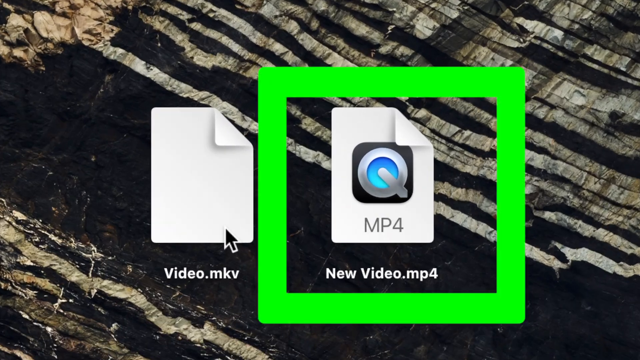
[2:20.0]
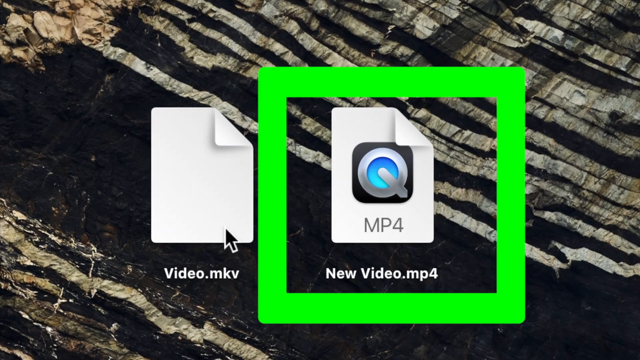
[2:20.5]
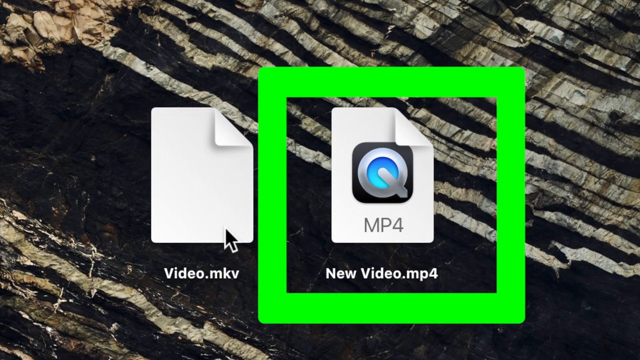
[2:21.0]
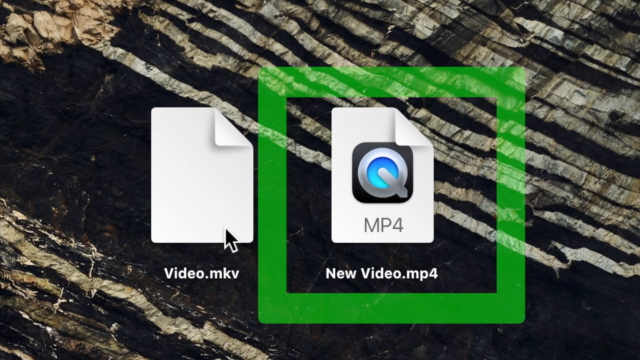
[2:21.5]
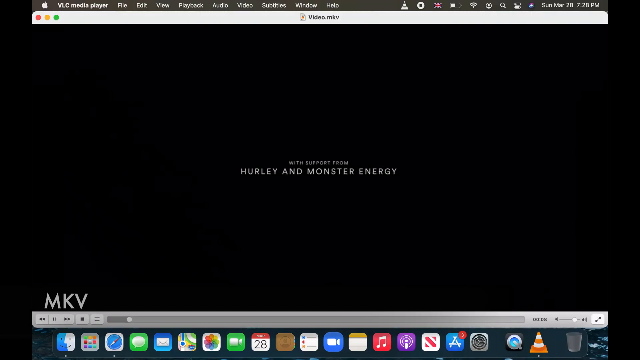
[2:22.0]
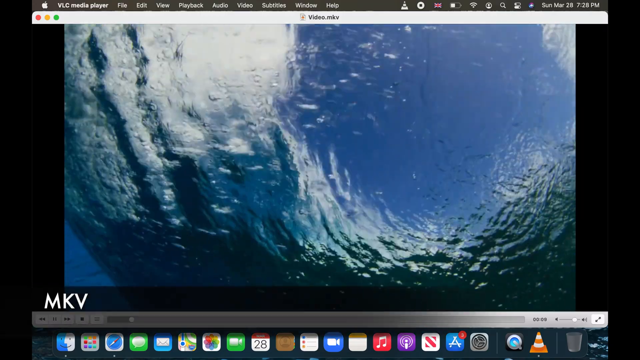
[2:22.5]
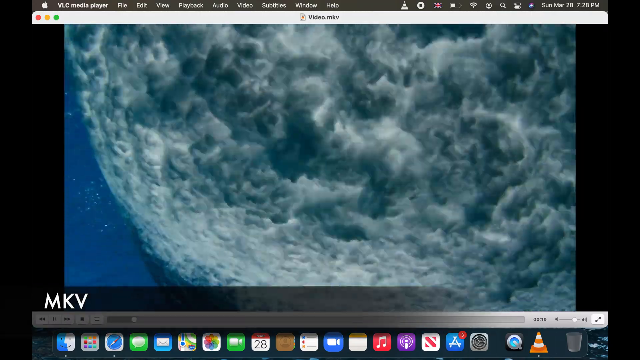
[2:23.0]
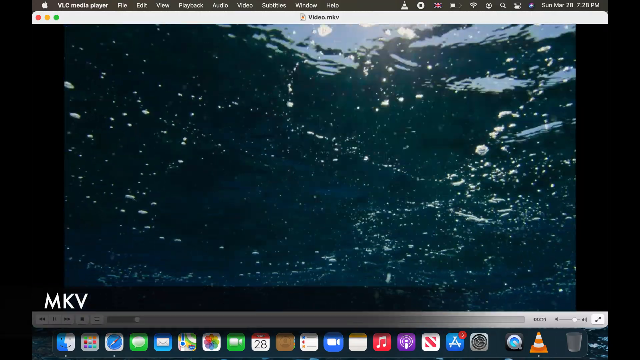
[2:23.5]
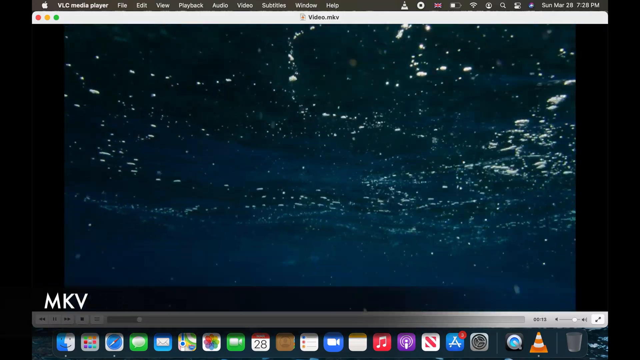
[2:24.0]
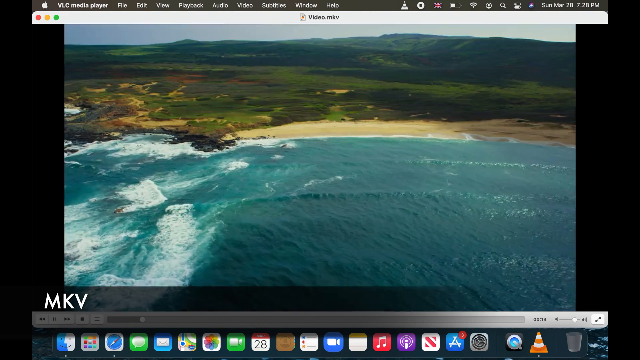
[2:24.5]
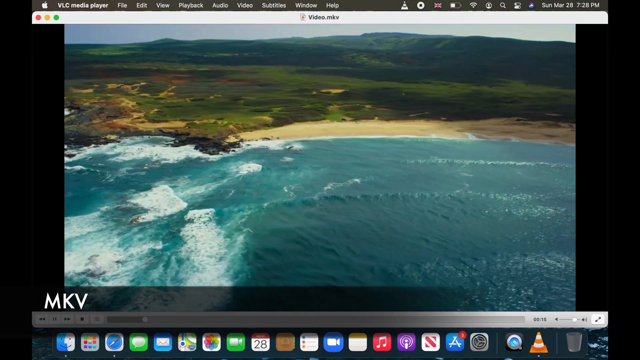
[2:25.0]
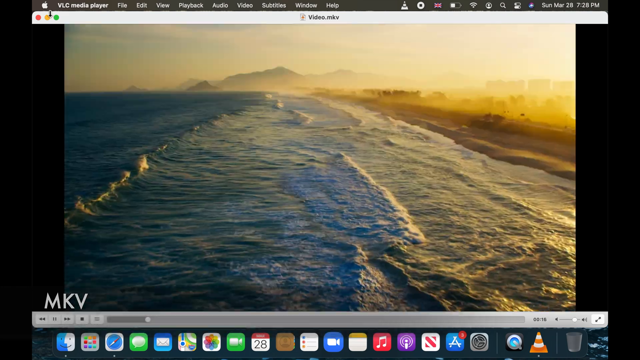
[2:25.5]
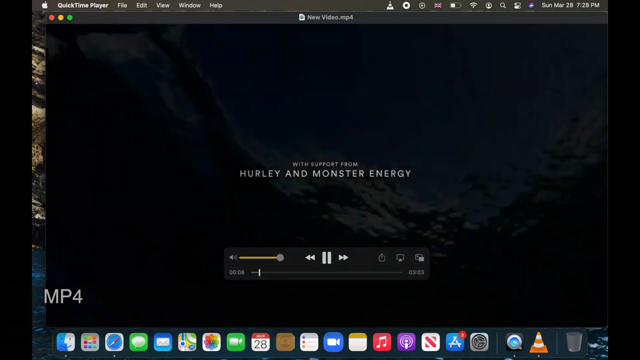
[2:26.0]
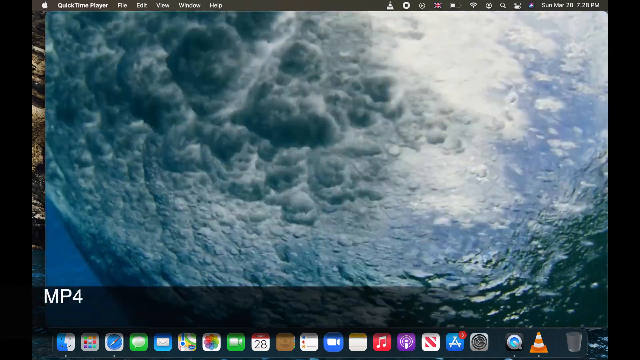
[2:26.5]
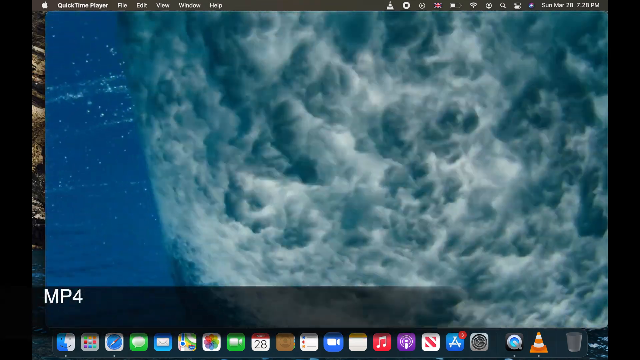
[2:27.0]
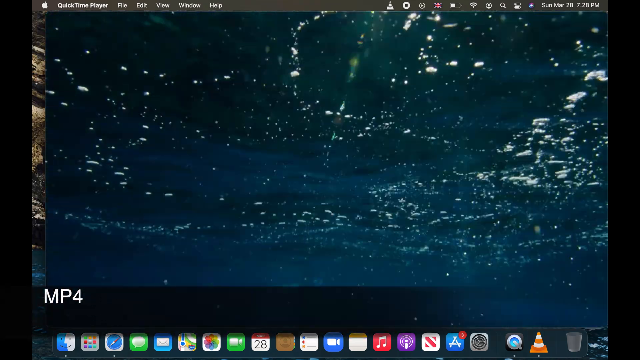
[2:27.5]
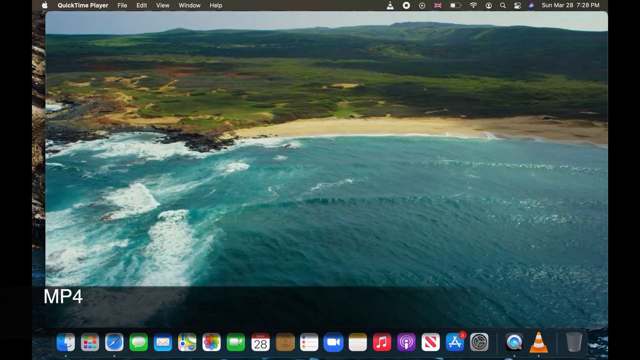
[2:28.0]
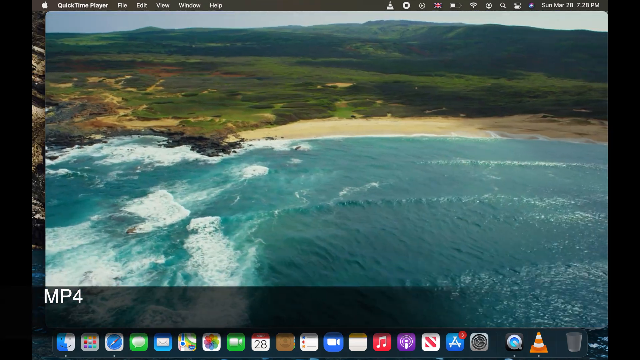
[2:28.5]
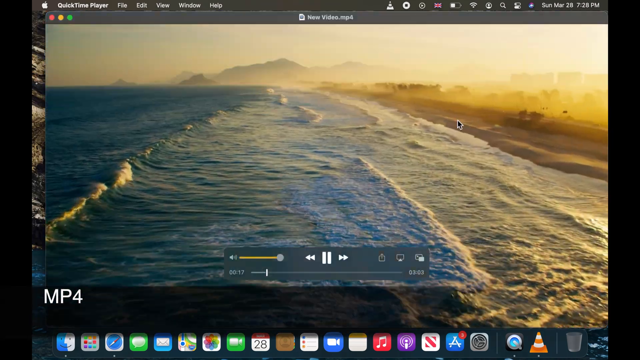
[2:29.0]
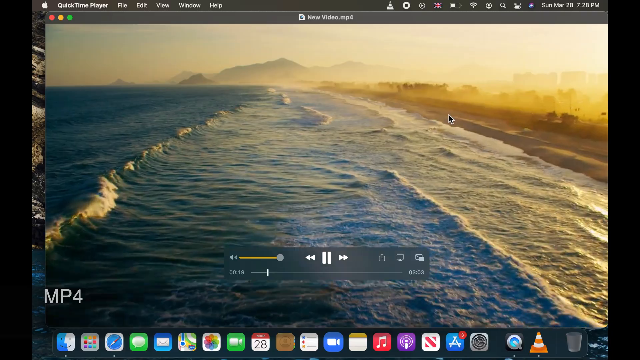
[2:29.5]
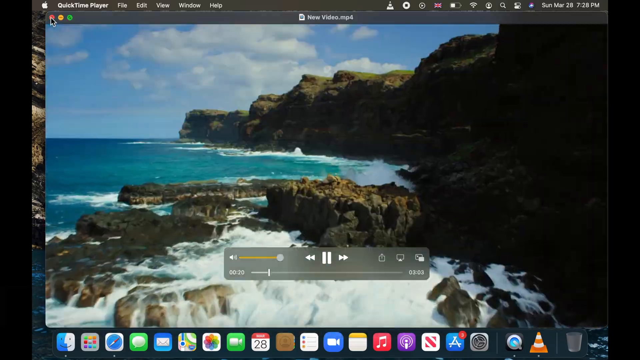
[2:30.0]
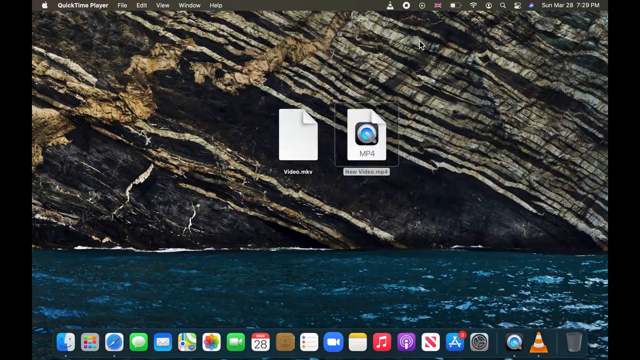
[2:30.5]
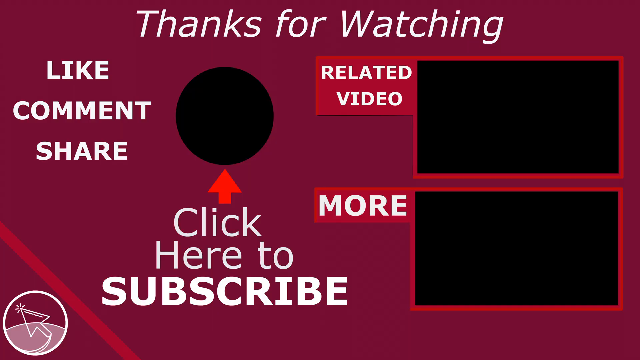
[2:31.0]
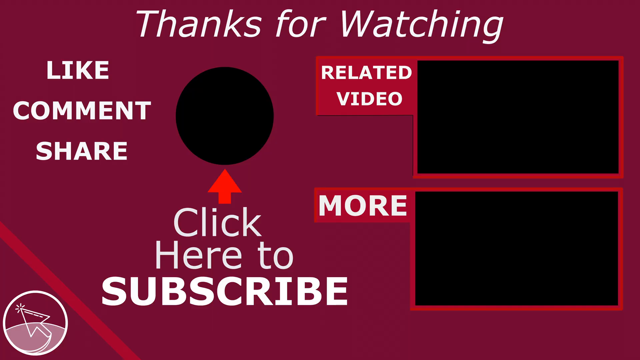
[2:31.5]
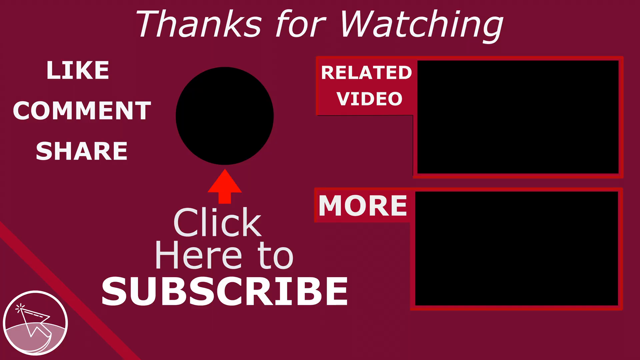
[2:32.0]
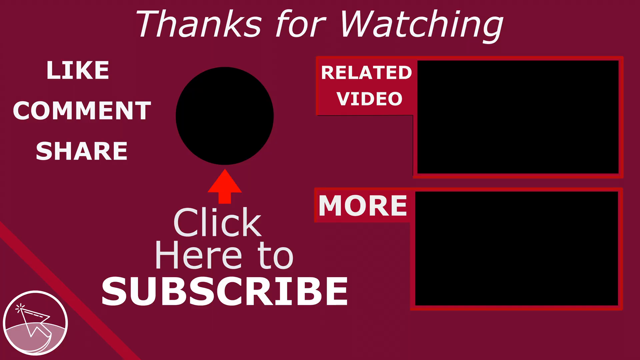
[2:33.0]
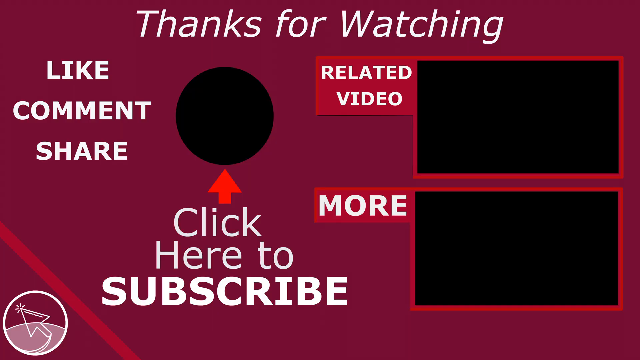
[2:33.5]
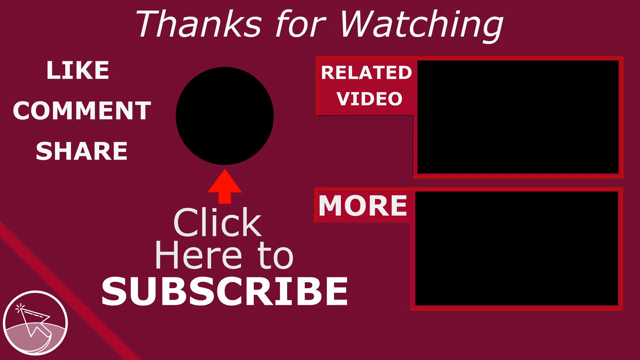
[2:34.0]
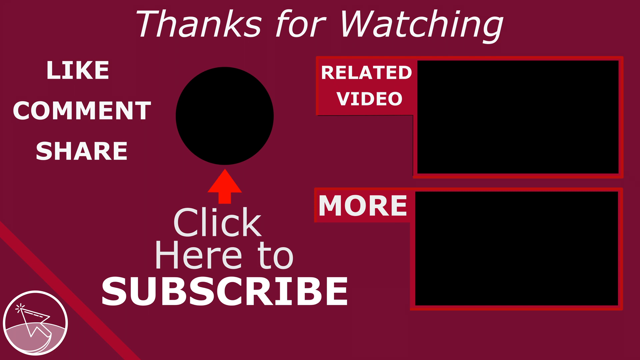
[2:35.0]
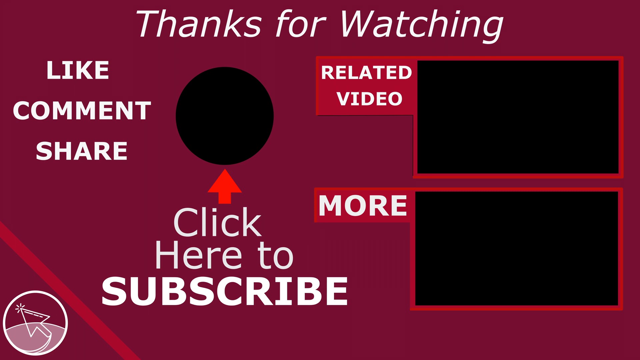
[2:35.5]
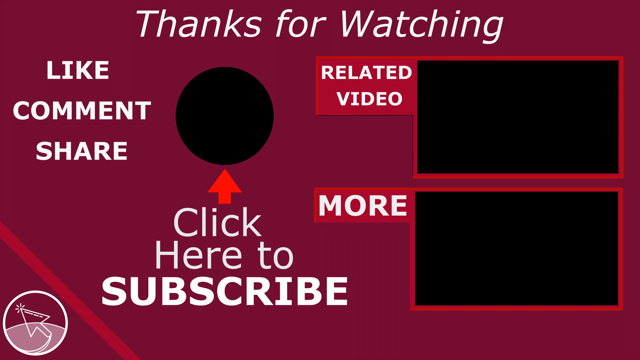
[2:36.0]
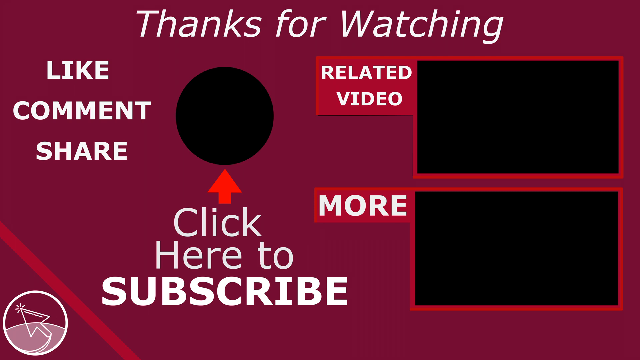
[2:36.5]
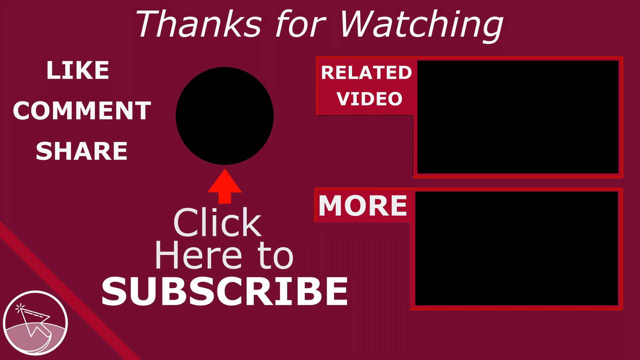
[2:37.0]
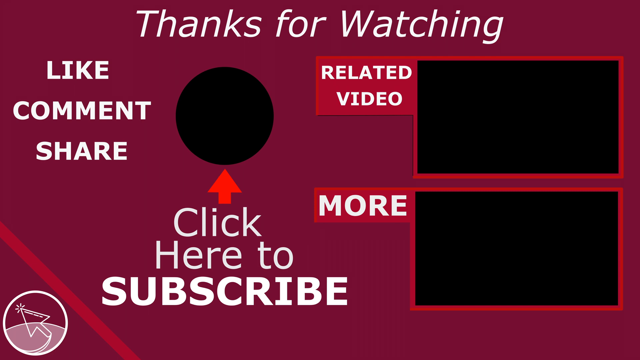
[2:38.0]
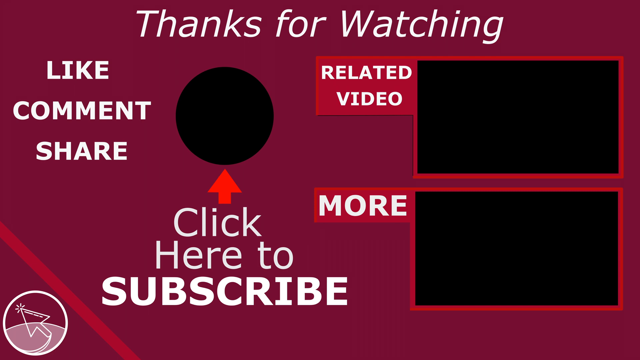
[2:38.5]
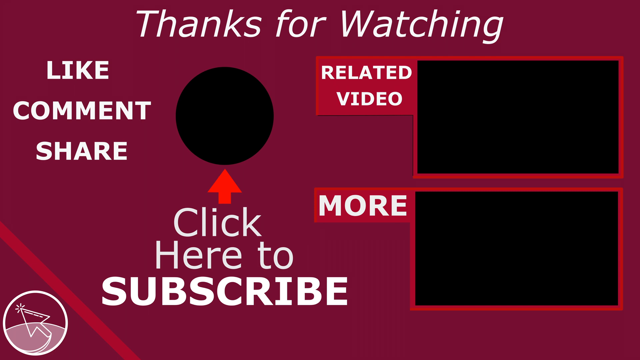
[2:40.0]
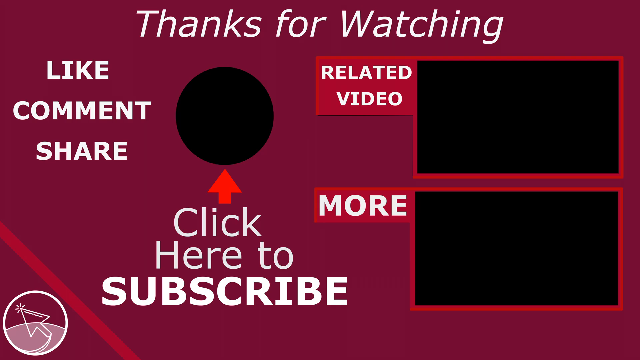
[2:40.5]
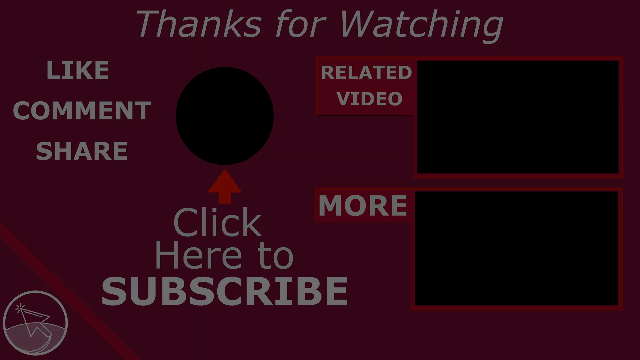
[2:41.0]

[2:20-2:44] A desktop, apparently part of some kind of tutorial, shows two files very up close: "video.mkv" and "new video.mp4," each represented by a piece of white paper with the corner folded down. The MP4 file has a big Q shape in the middle of the paper and is surrounded by a green rectangle or square. Suddenly video footage plays, showing water moving, a big beach, and another view of a beach; the footage repeats. Then a mulberry-colored background appears with white text reading "thanks for watching," and "like, comment, share" on the left-hand side. In the middle is a big black circle, with a red arrow pointing up underneath it and white text reading "click here to subscribe." On the right-hand side, "related video" appears with a rectangle where a video should be, but it is just black, and "more" appears underneath with another empty rectangle. The video stays on this screen.